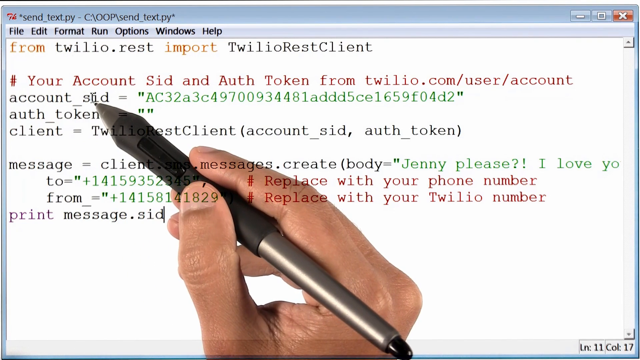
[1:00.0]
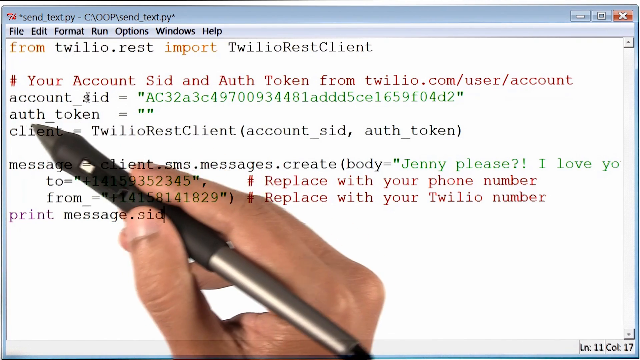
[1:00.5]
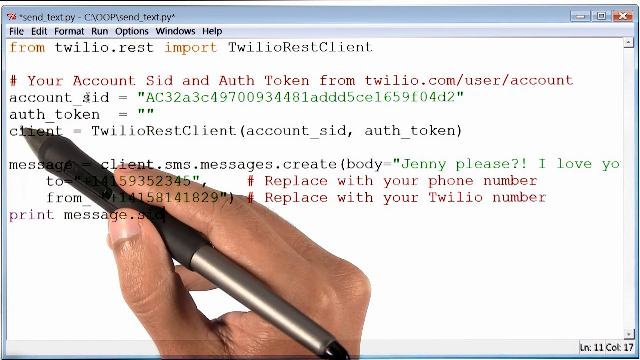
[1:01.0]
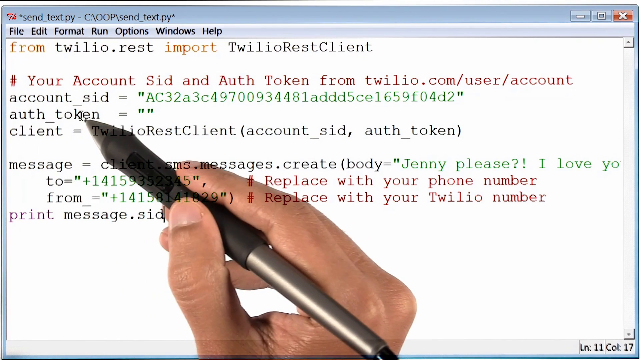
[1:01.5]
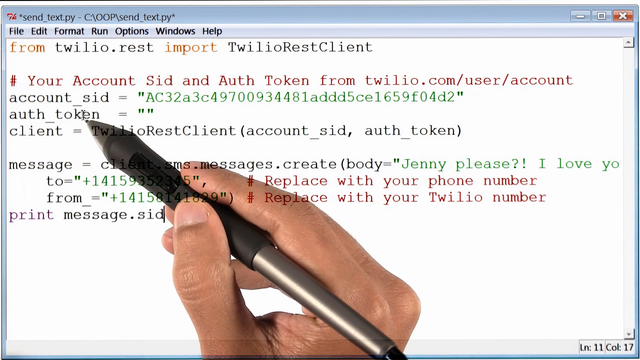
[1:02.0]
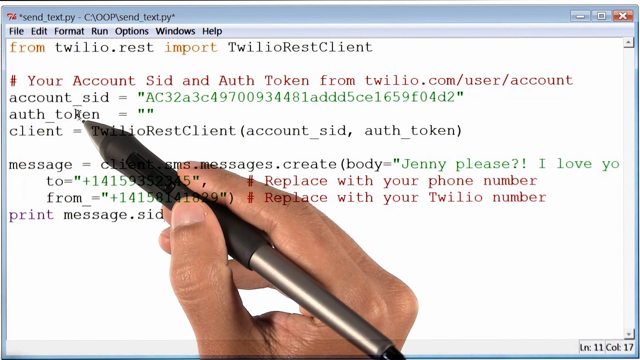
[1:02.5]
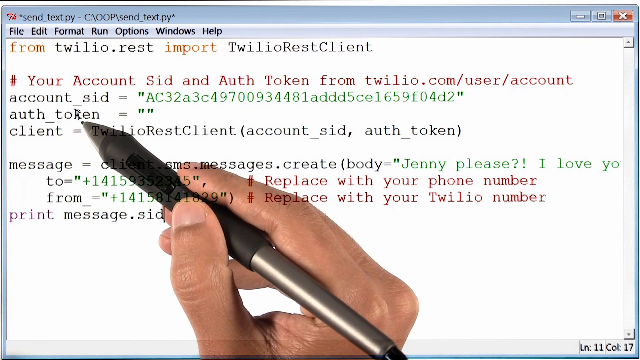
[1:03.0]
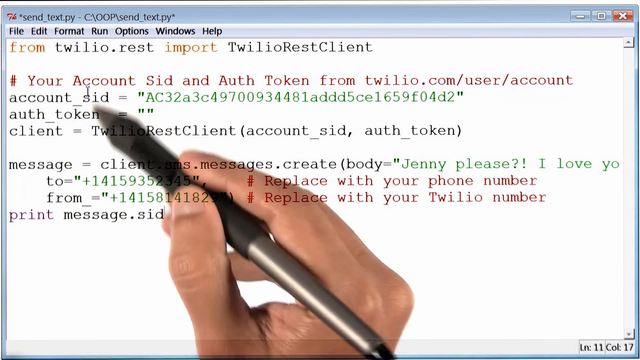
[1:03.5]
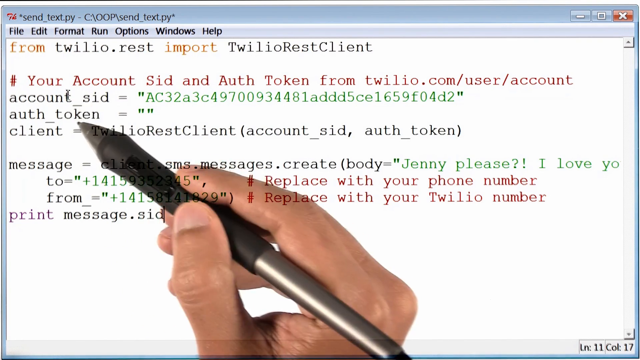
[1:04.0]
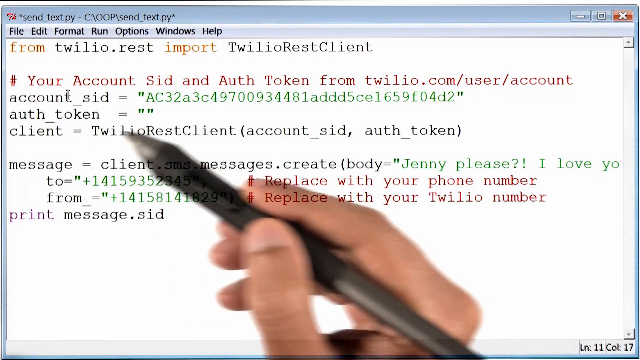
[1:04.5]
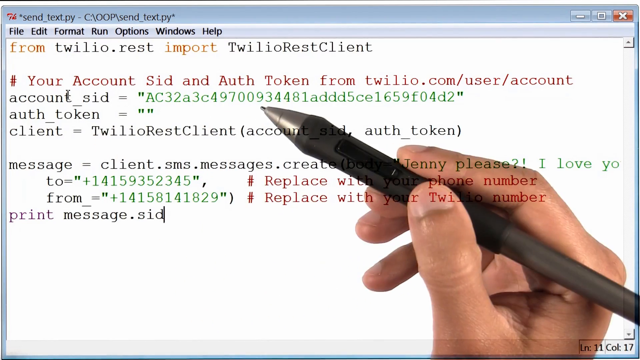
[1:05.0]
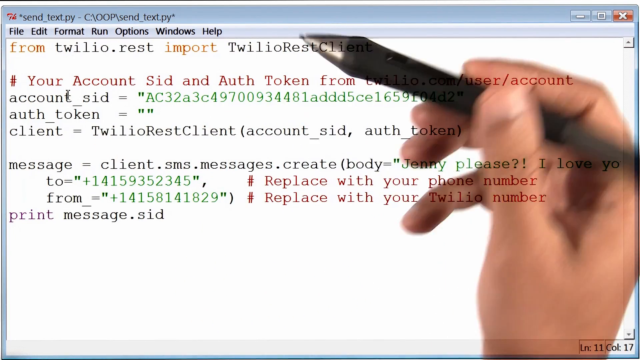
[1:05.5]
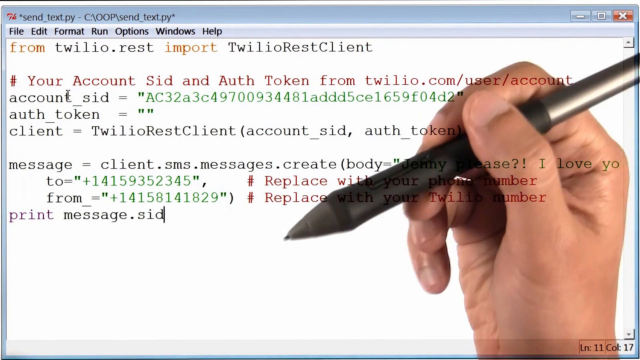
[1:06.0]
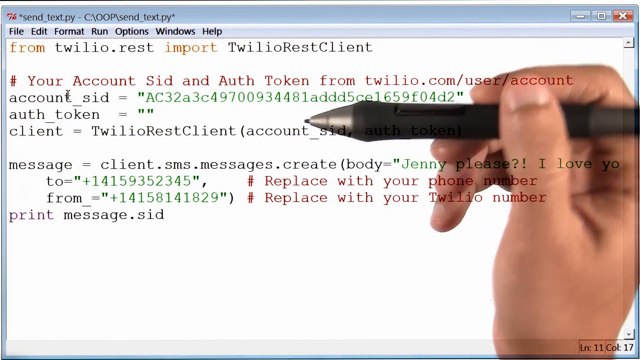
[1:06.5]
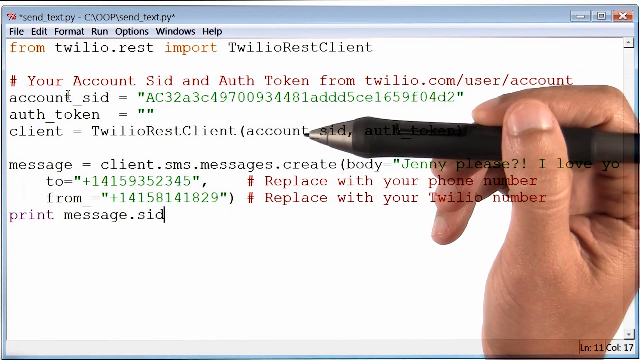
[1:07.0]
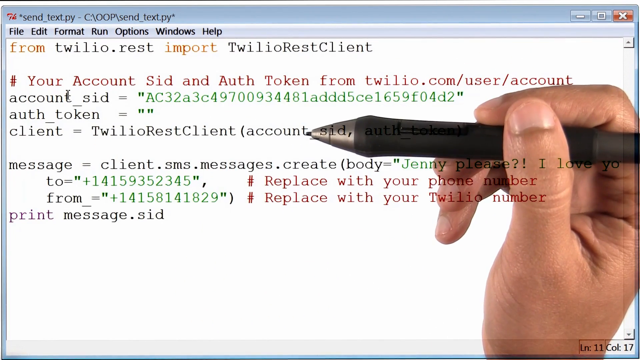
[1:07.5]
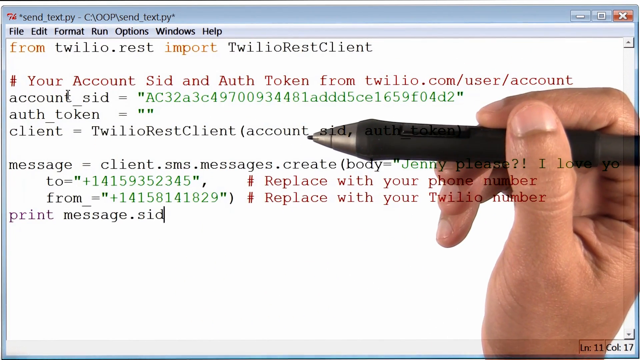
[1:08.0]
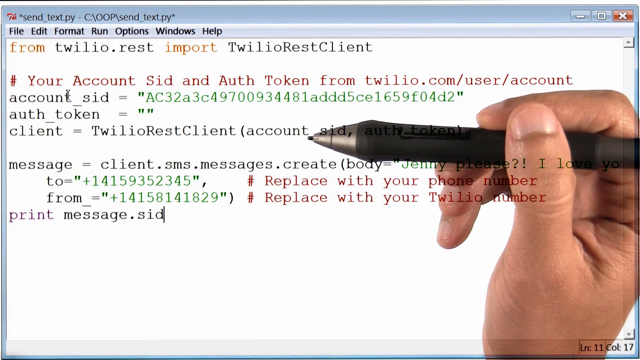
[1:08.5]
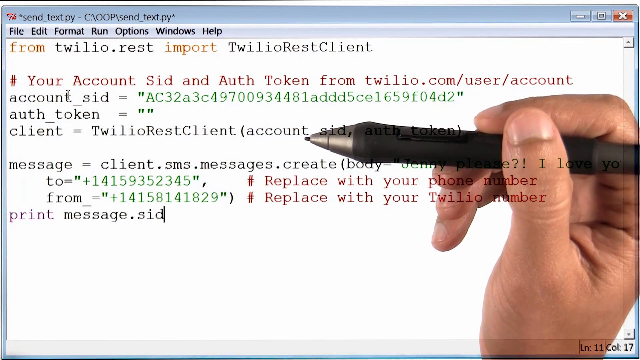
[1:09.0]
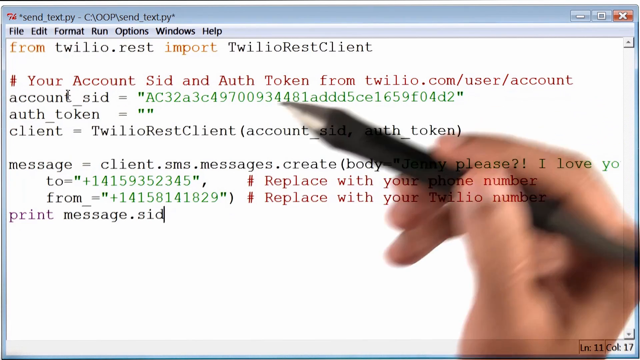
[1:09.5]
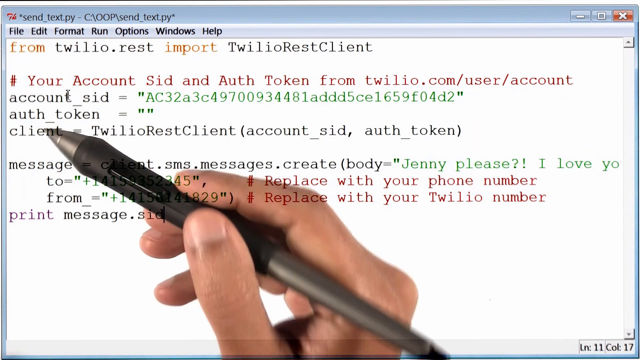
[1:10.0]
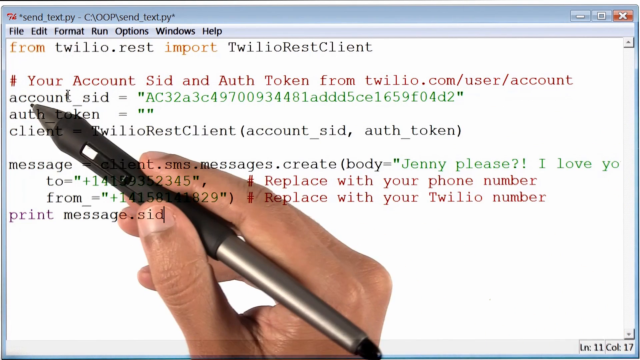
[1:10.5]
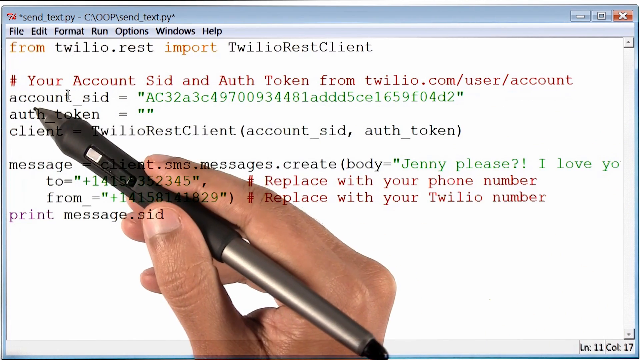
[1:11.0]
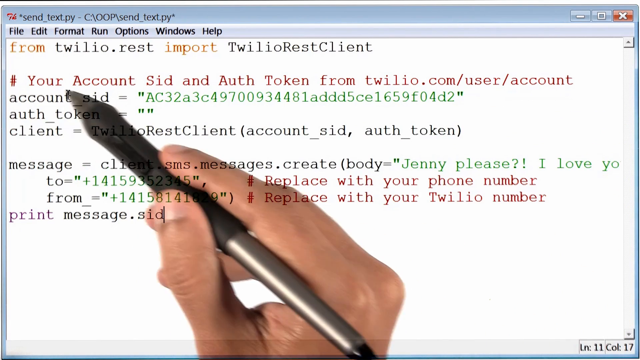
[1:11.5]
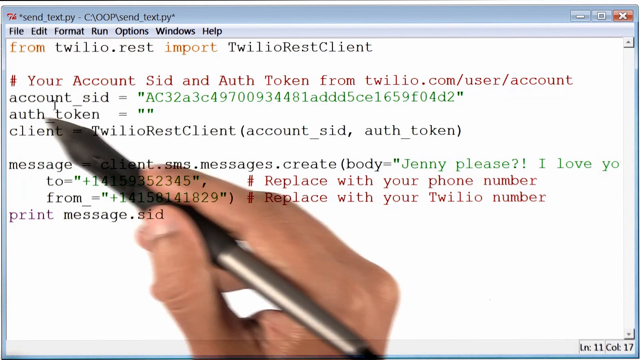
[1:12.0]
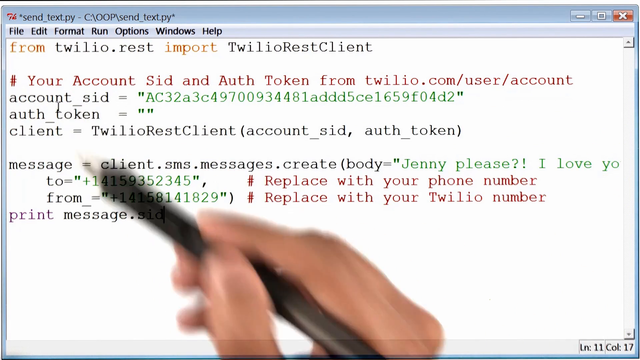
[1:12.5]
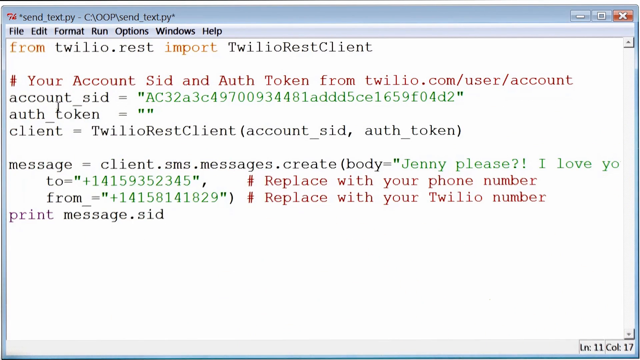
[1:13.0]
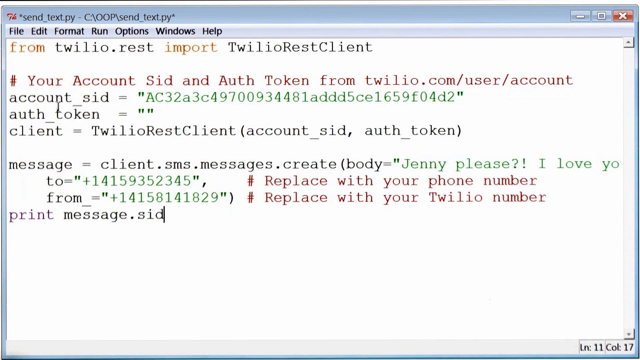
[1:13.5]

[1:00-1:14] He hovers over the authentication token line, then holds the pen slightly toward its middle, with his thumb on the middle of the pen and the pen resting on his index and middle fingers. He moves to the client line of the code, hovers over the account SID, then hovers over the authentication token and circles it with his hand. He points down with the pen, hovers over the client line, and then hovers in a circular motion over the account SID line of code.